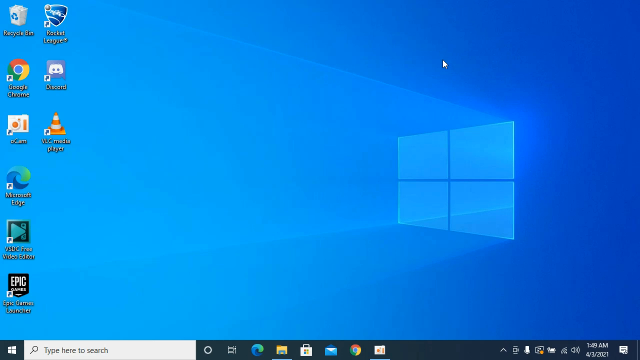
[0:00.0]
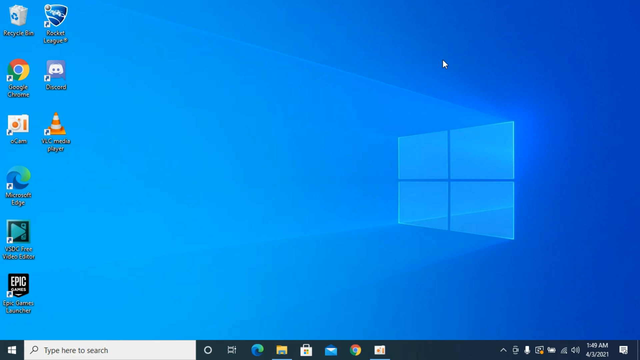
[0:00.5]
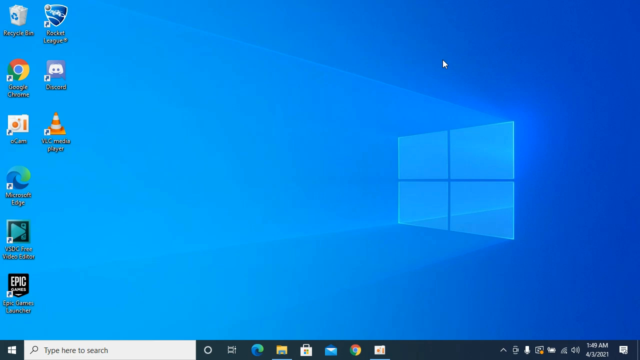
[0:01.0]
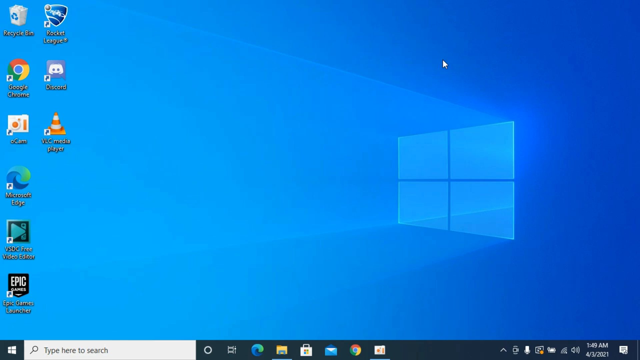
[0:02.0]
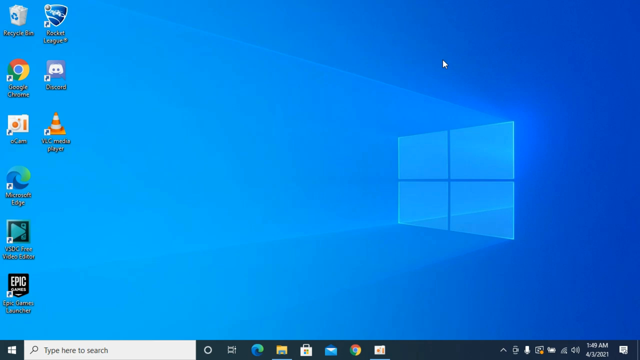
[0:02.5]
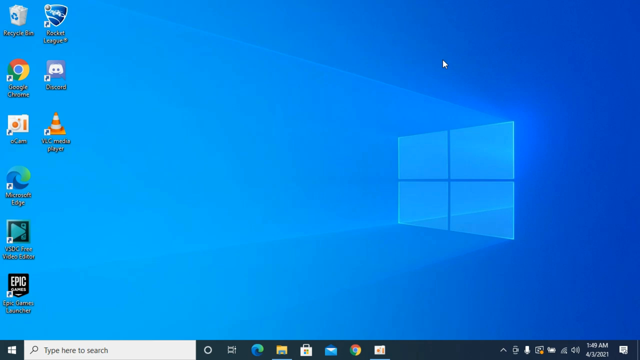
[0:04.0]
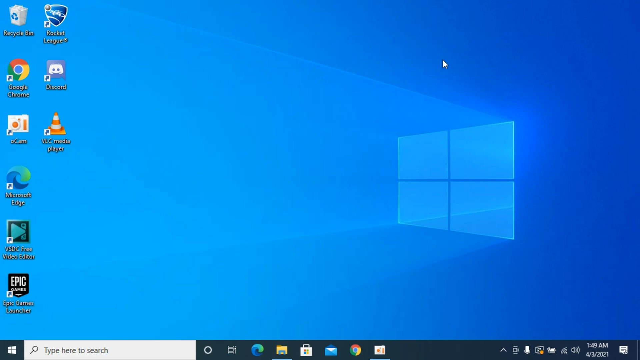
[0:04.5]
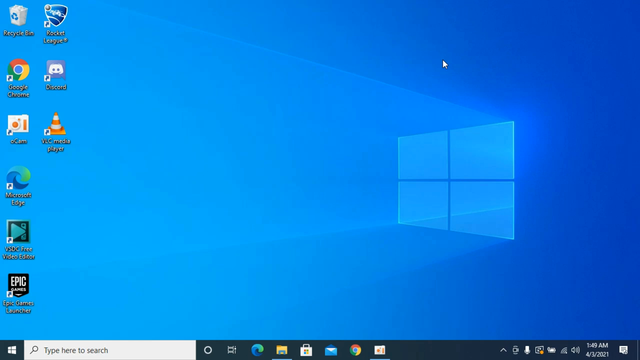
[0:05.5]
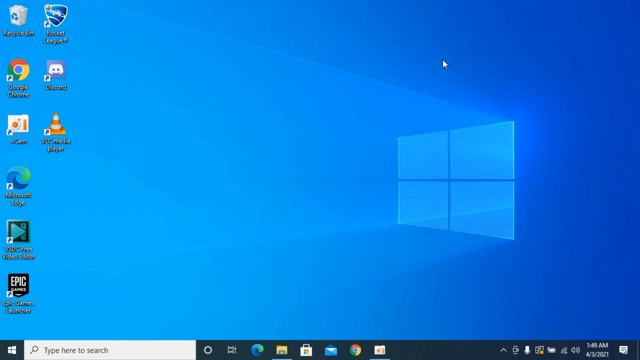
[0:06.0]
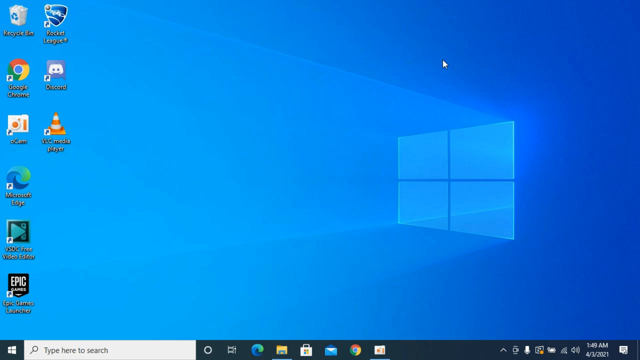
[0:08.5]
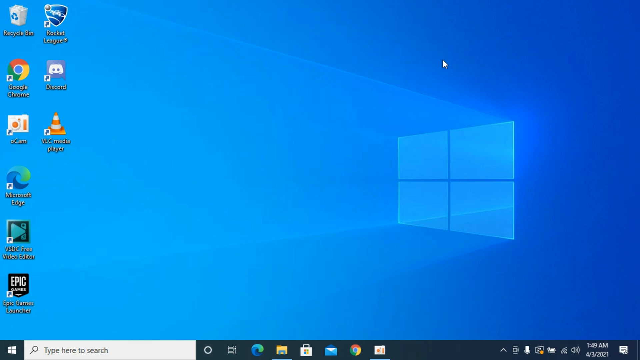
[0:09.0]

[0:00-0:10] A still screenshot of a Windows desktop appears. Icons for Google Chrome, Ecamm, Microsoft Edge and a few other apps run down to Epic at the bottom, and another row starts with Rocket League, Discord and VLC Media Player. The Windows logo is on the side of the blue background, and the user's cursor is on the screen.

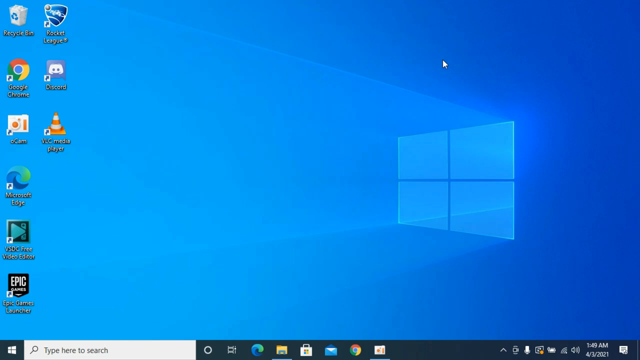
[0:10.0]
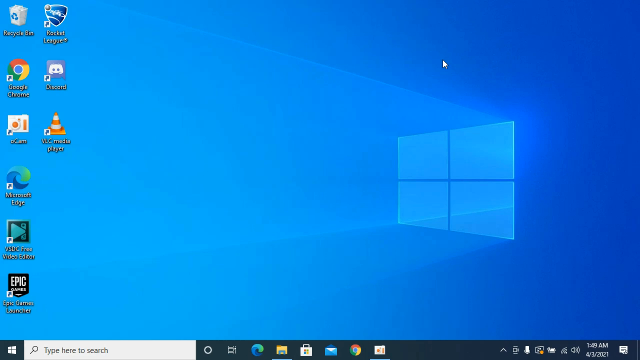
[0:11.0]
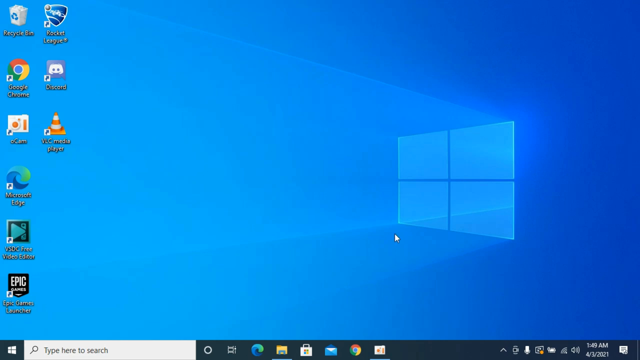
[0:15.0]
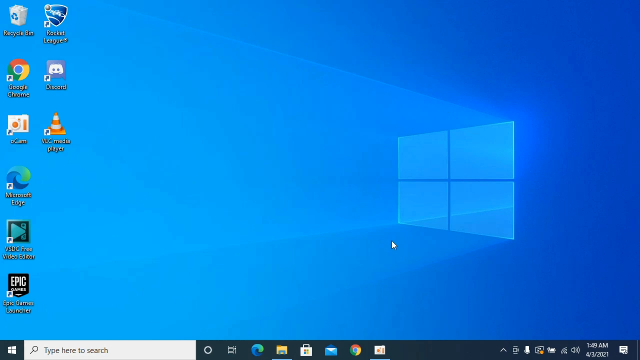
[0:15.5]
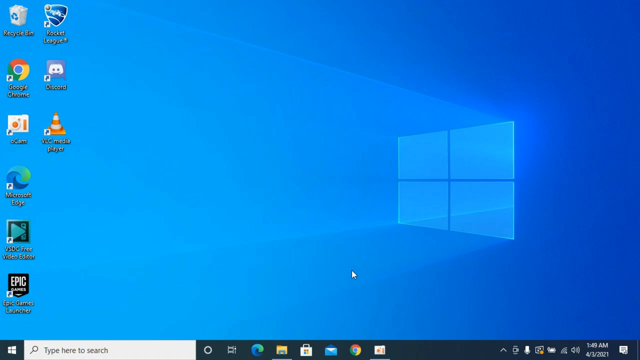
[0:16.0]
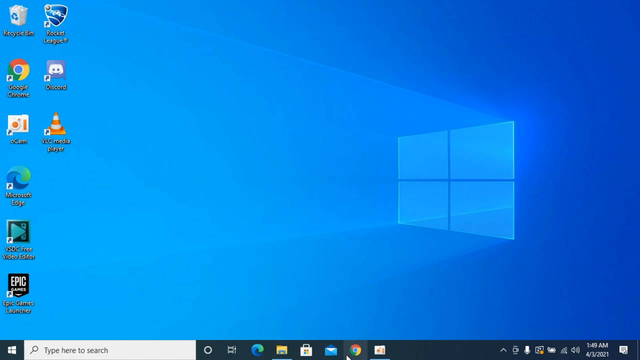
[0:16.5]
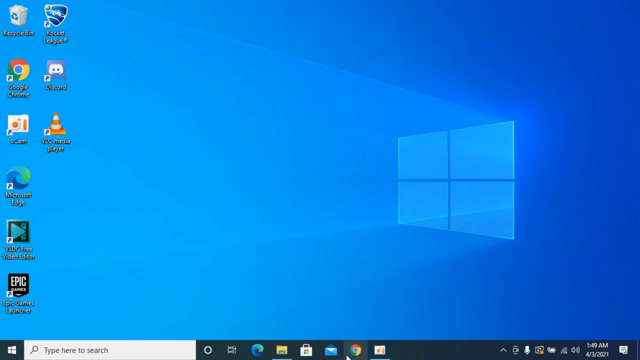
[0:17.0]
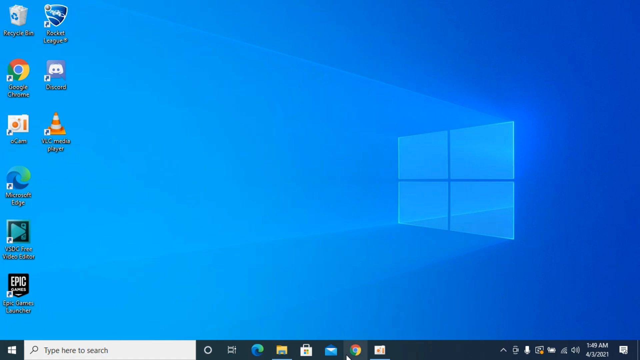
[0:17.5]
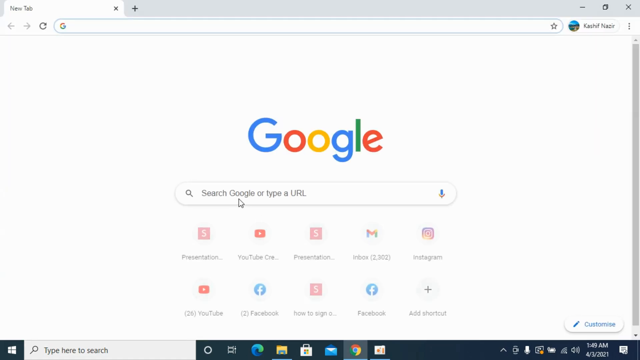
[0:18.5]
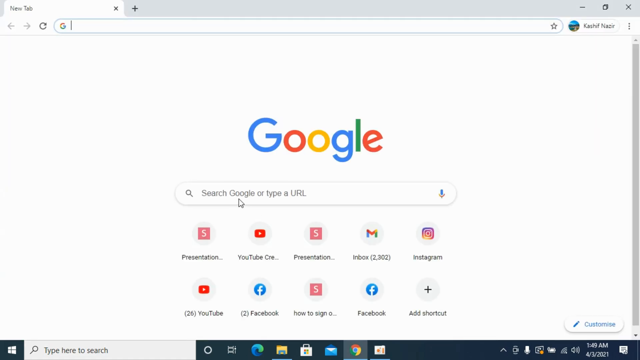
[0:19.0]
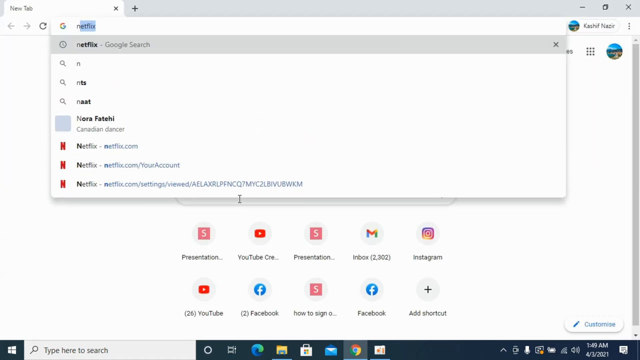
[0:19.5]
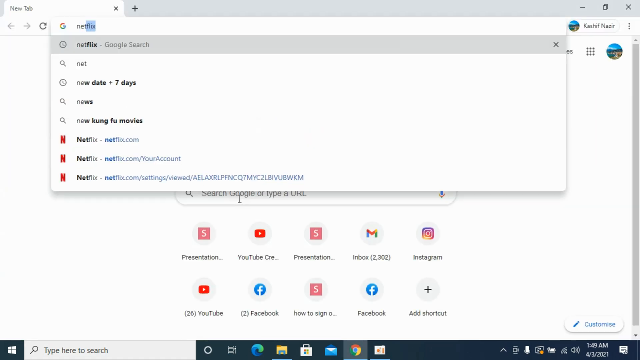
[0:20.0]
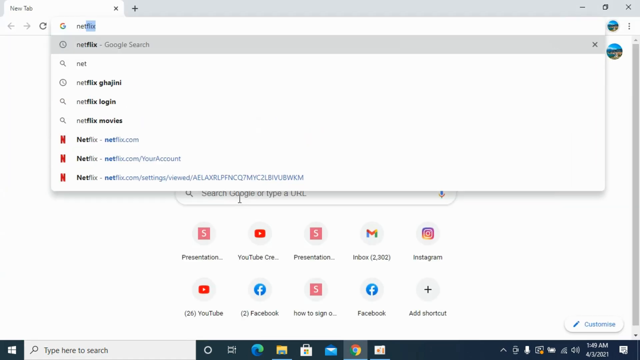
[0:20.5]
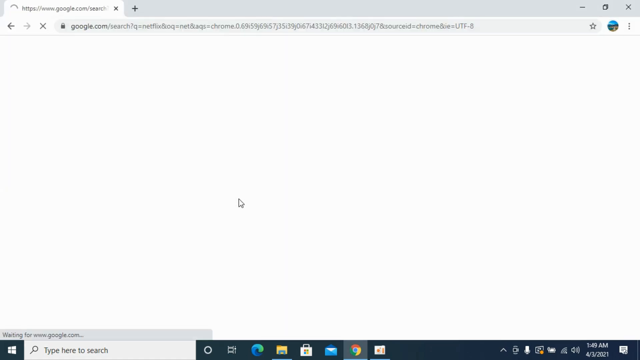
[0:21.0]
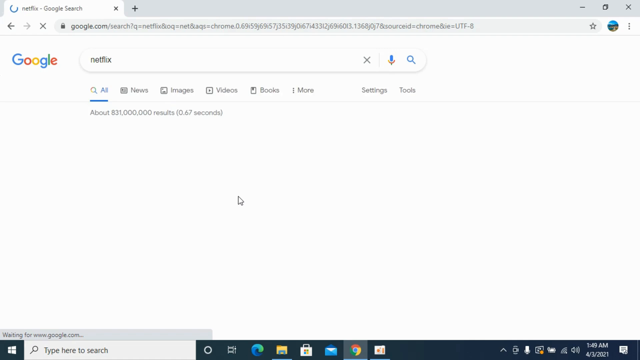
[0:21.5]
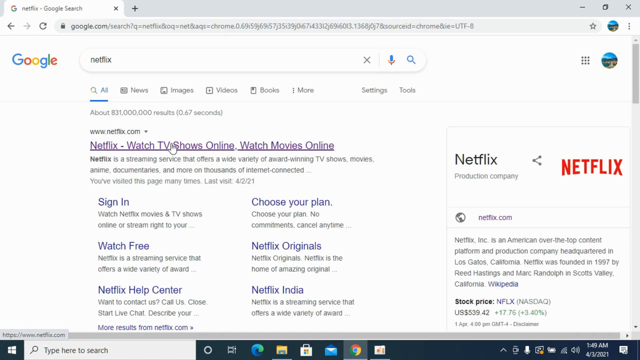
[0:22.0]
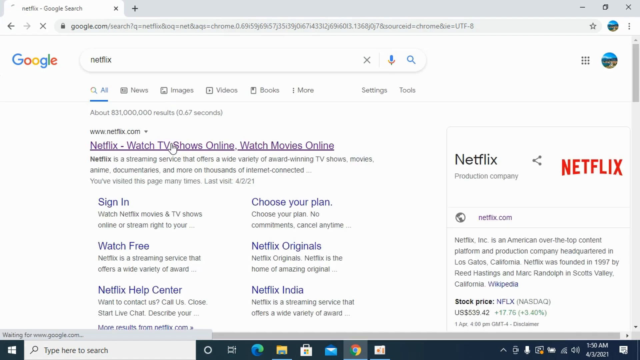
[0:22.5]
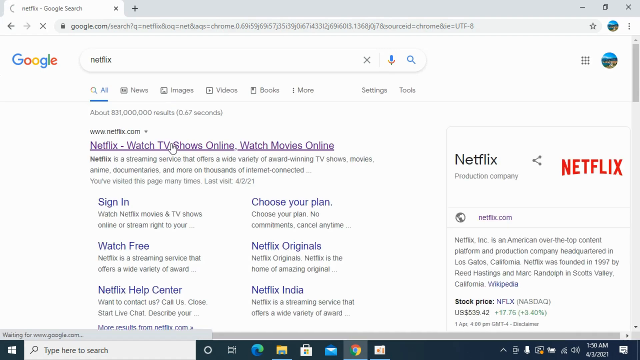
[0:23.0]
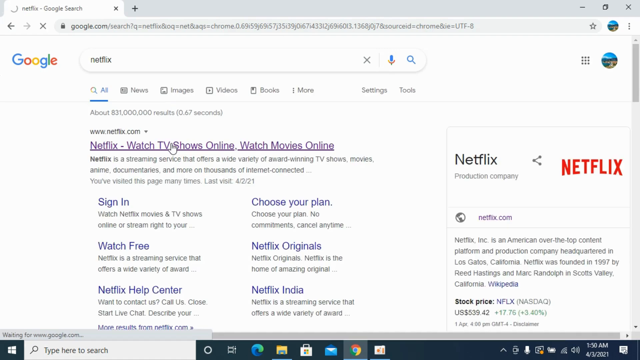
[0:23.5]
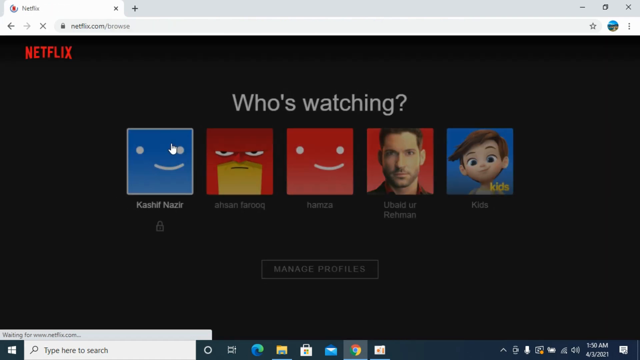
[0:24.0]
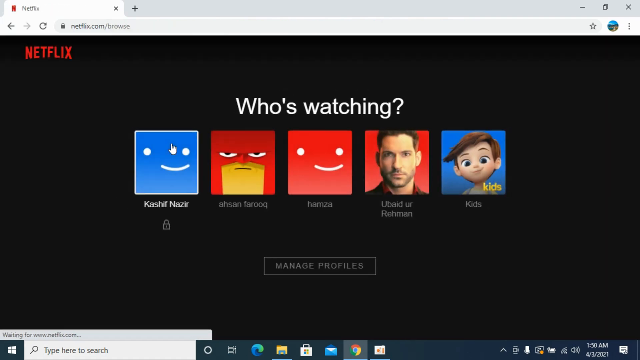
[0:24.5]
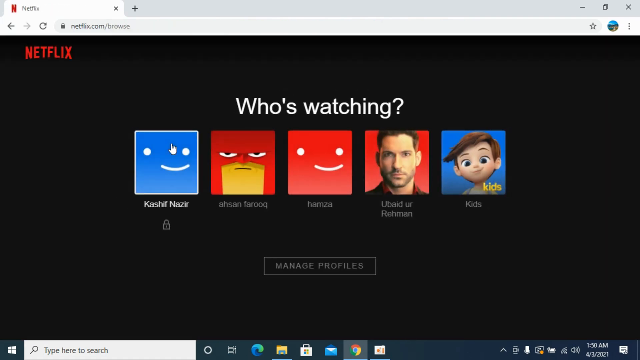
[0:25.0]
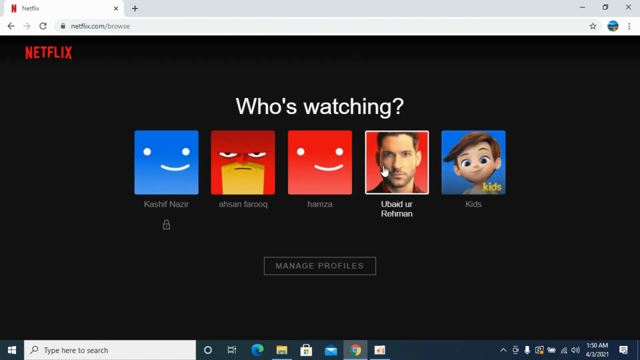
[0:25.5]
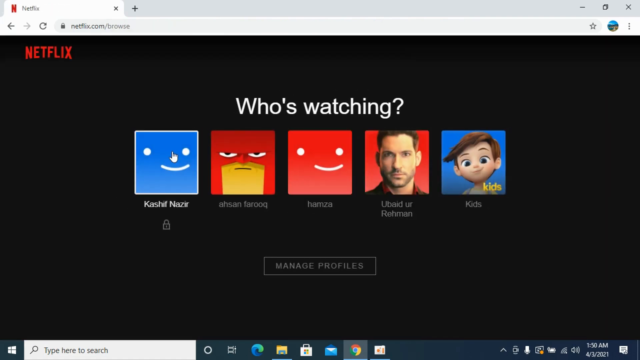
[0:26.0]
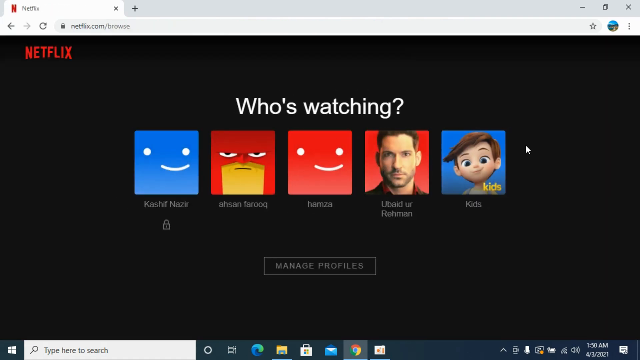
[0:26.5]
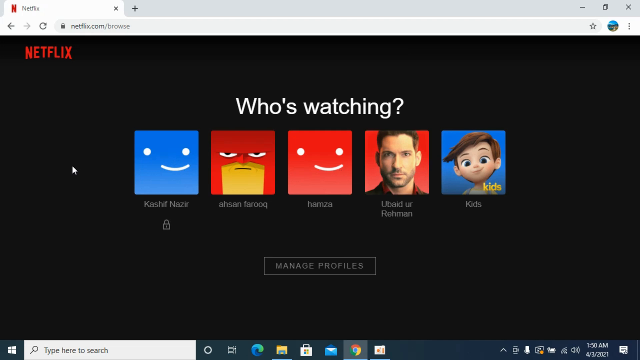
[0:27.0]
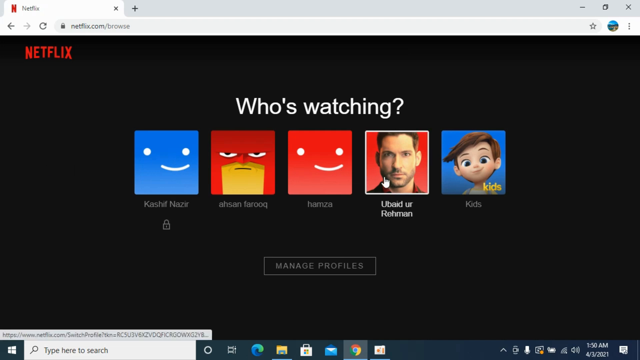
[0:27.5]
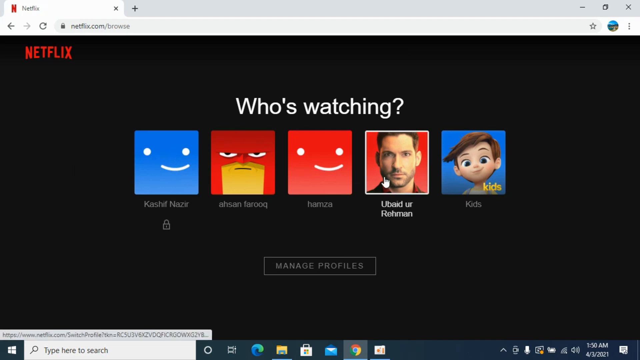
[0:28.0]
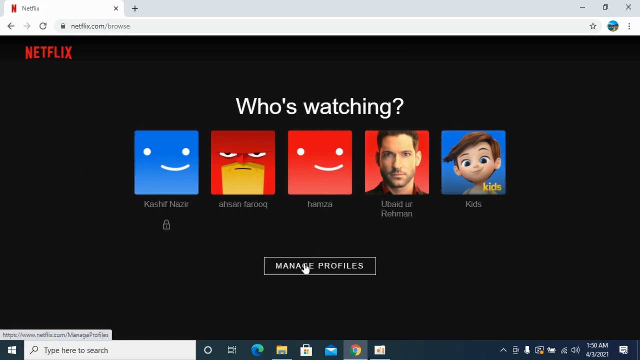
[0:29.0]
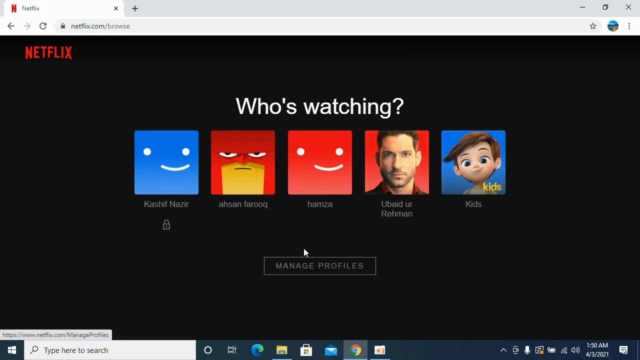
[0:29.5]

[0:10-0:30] The Windows desktop has a solid blue background with nothing but a Windows logo on it. The icons are the recycle bin at the very top on the left, a Google Chrome icon underneath it along with Ecamm, then Microsoft Edge and a couple more down the side. The user's cursor starts moving across the screen. Managing profiles is shown, along with a spot on Netflix where an account can be added.